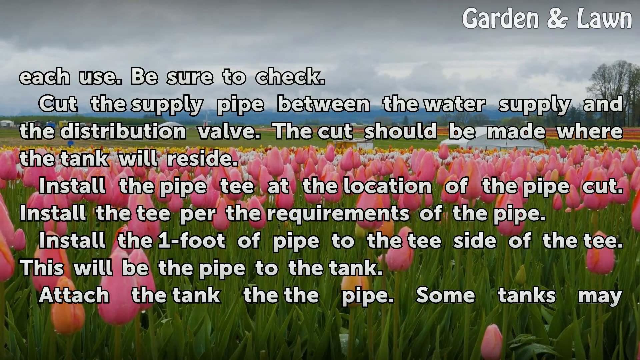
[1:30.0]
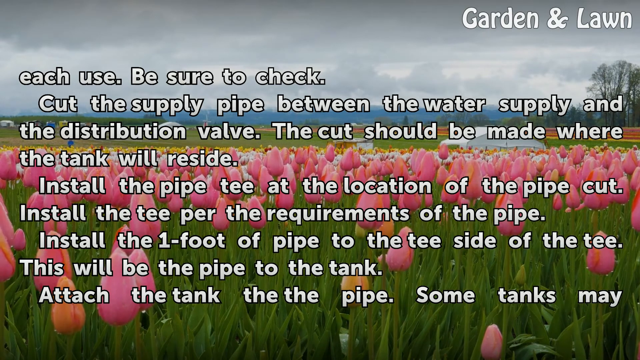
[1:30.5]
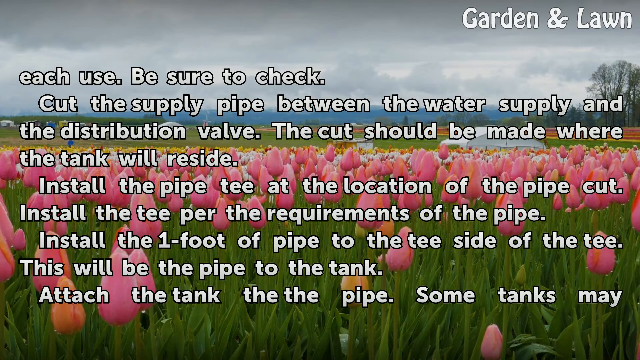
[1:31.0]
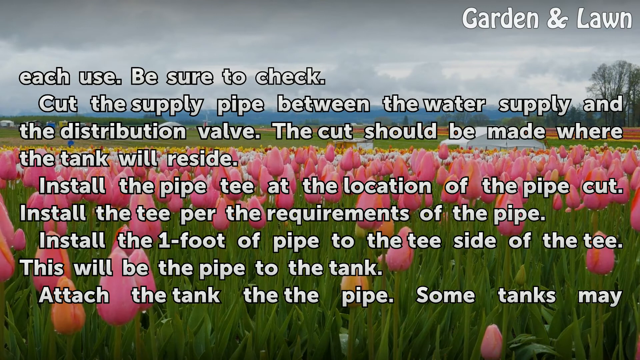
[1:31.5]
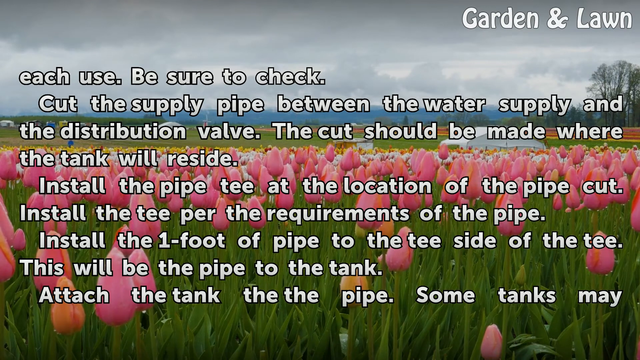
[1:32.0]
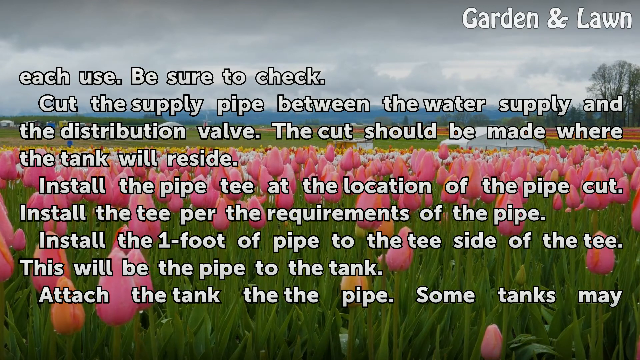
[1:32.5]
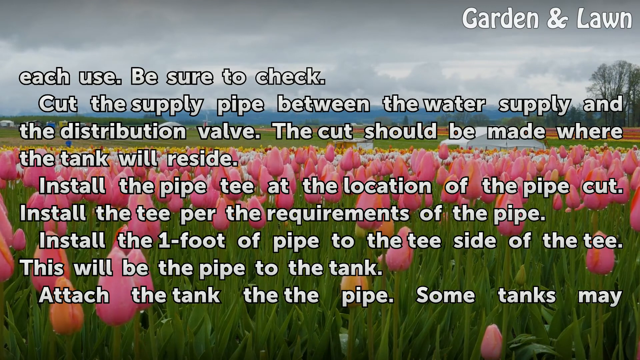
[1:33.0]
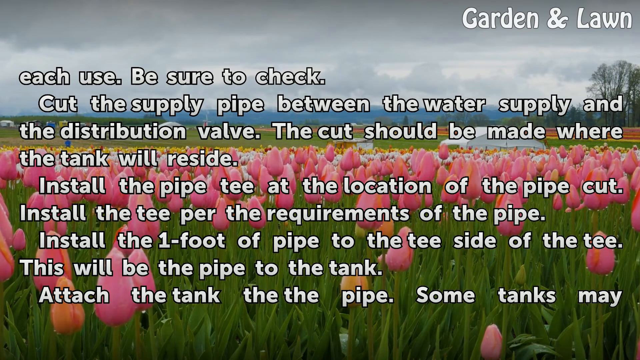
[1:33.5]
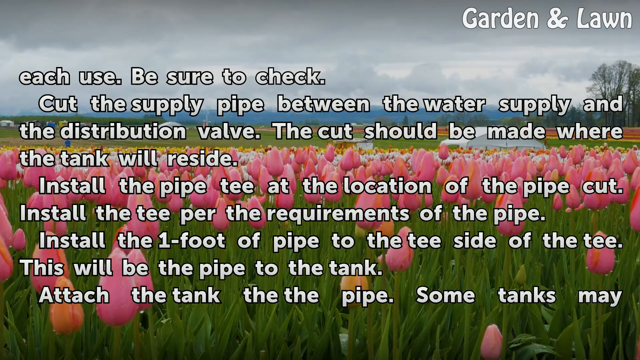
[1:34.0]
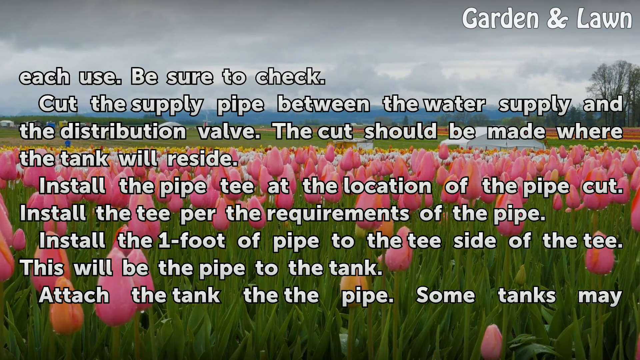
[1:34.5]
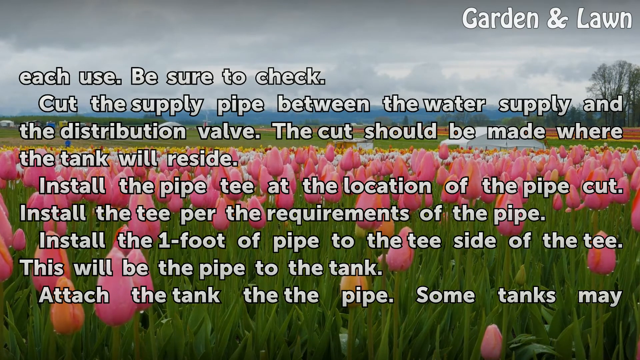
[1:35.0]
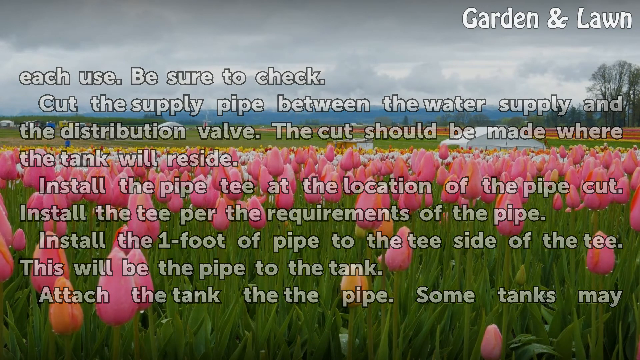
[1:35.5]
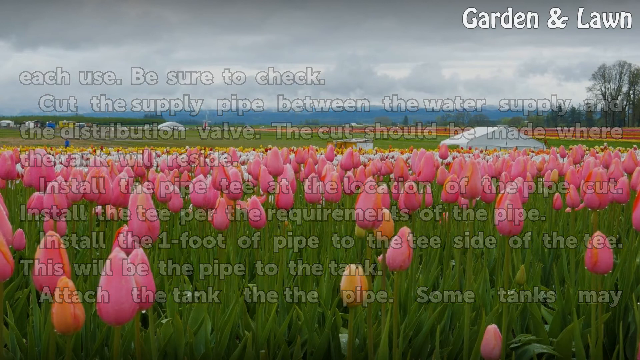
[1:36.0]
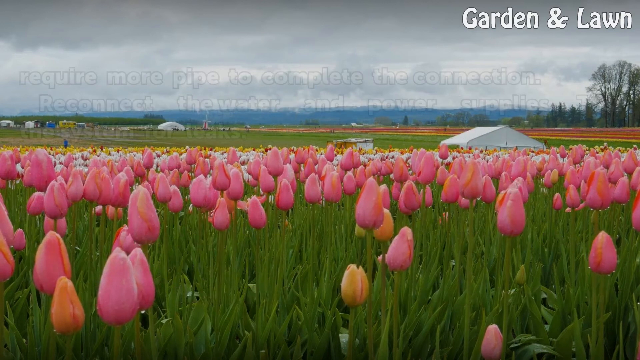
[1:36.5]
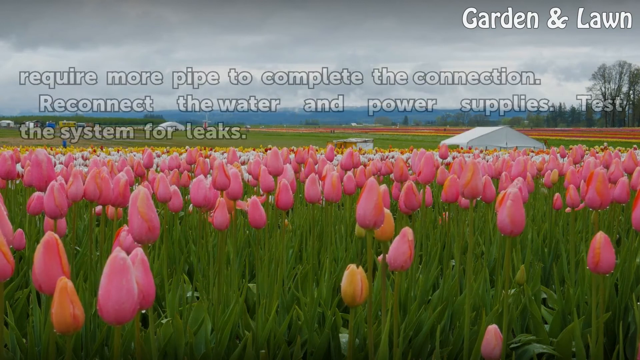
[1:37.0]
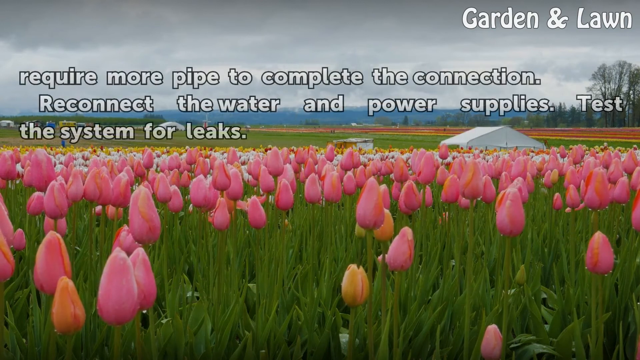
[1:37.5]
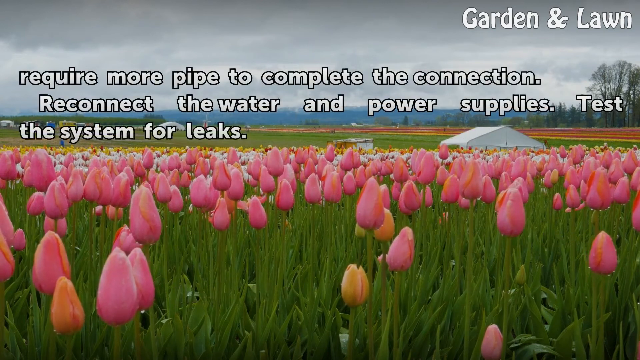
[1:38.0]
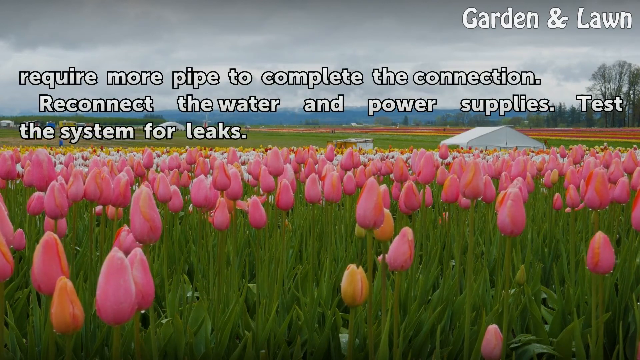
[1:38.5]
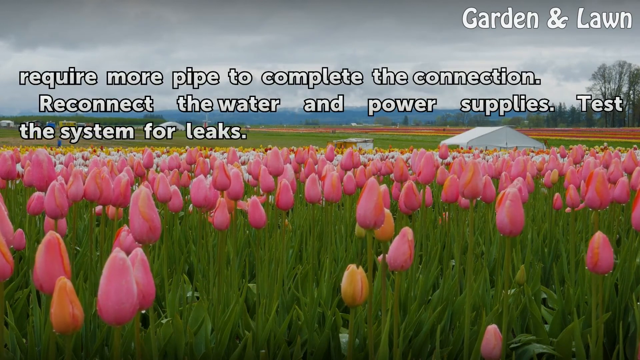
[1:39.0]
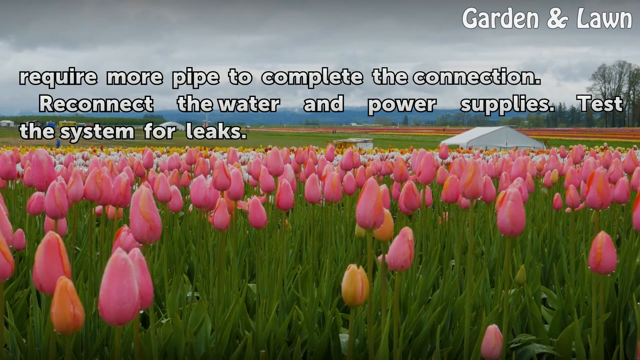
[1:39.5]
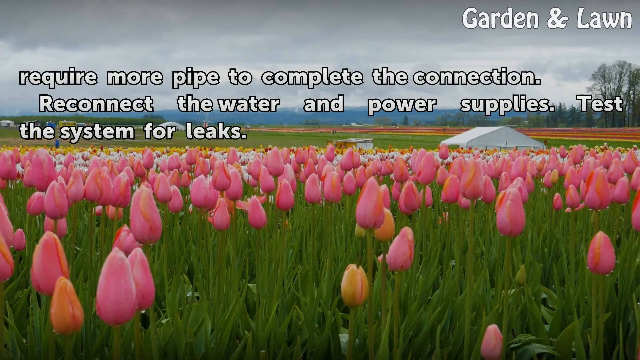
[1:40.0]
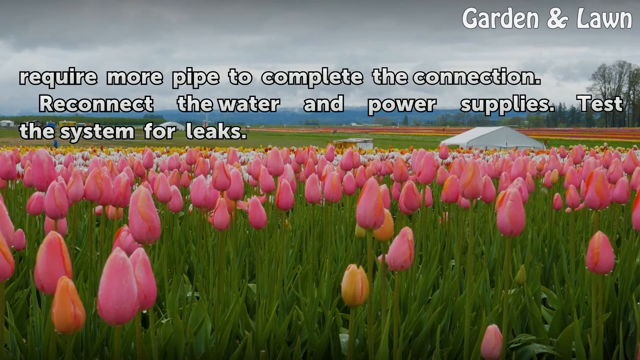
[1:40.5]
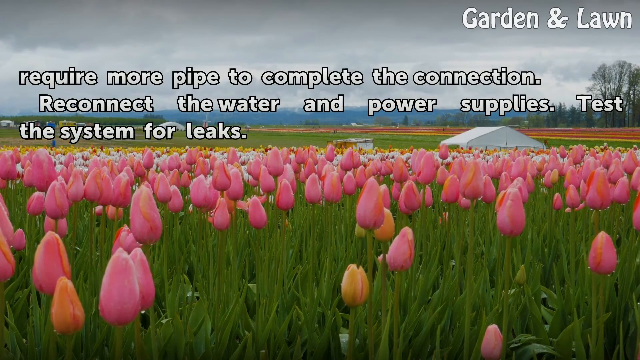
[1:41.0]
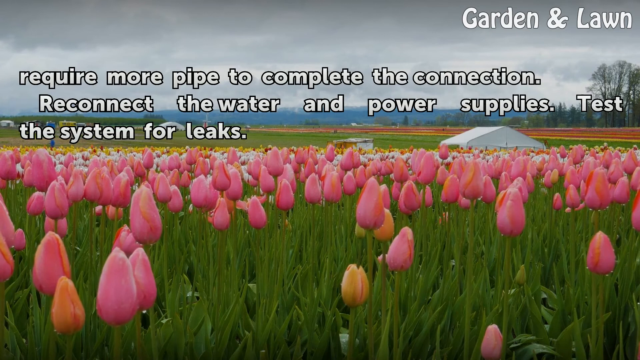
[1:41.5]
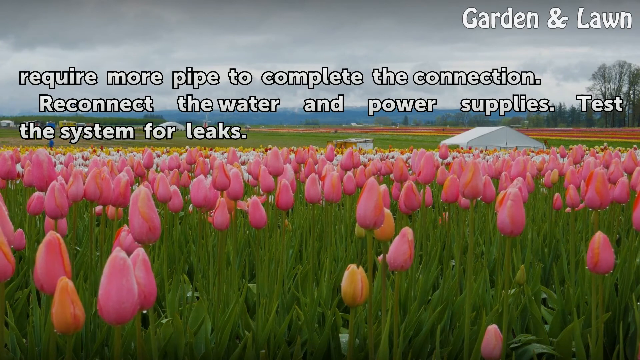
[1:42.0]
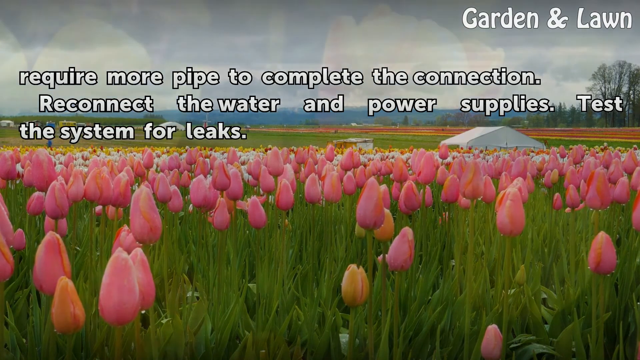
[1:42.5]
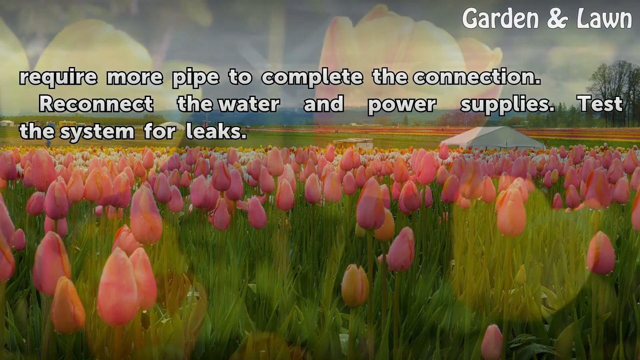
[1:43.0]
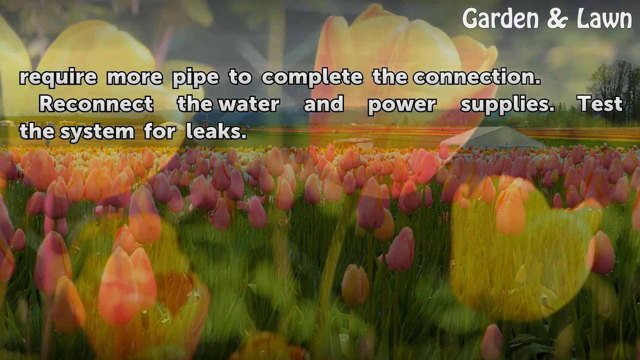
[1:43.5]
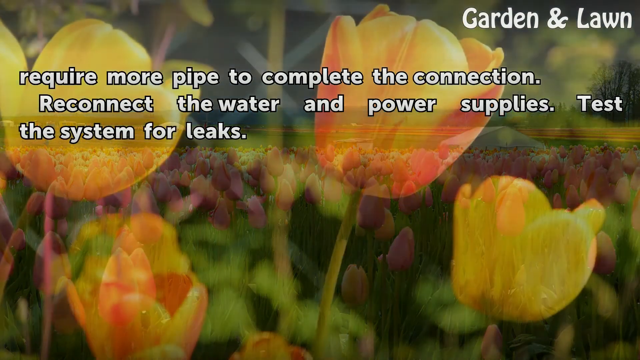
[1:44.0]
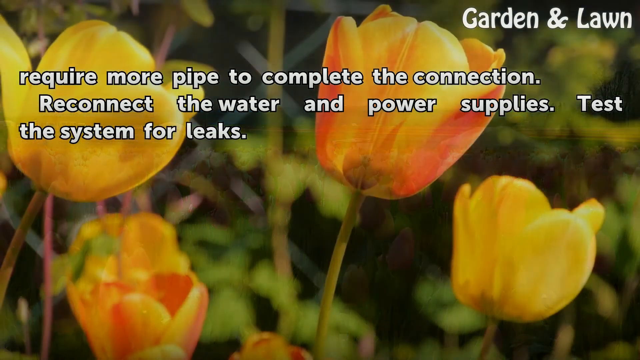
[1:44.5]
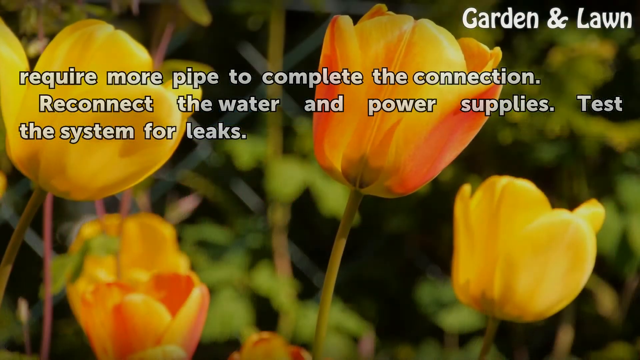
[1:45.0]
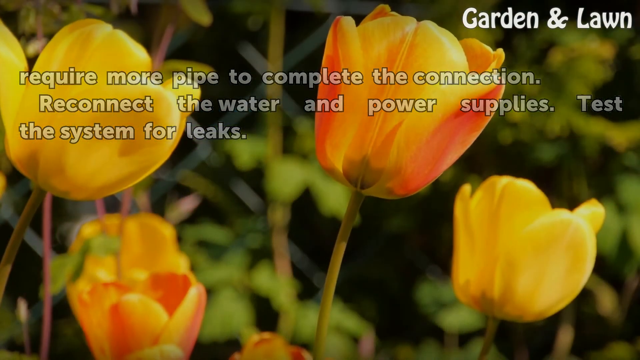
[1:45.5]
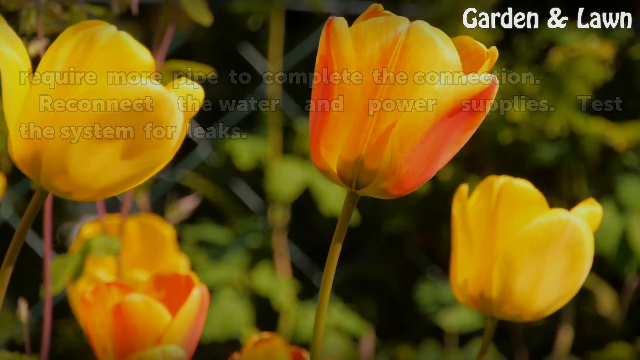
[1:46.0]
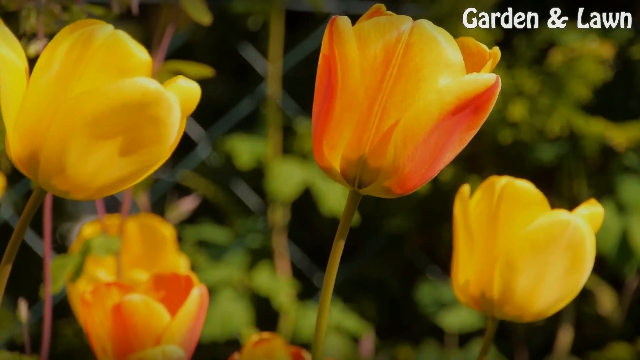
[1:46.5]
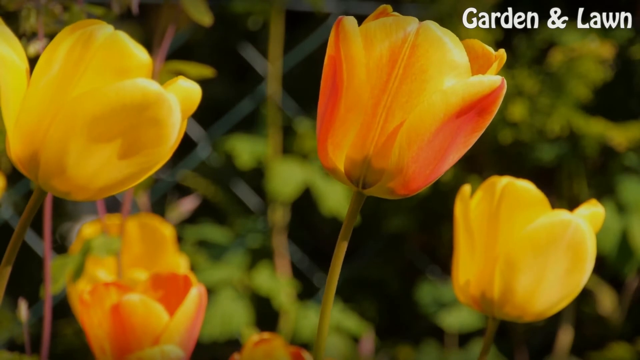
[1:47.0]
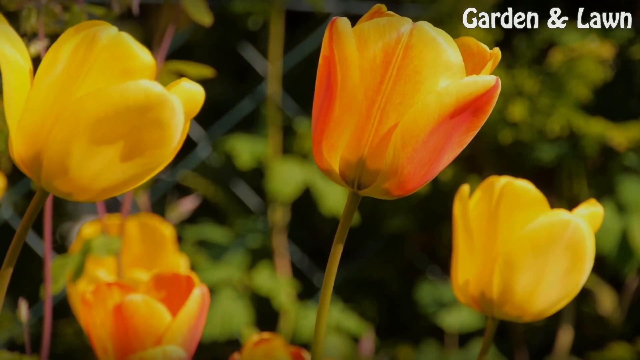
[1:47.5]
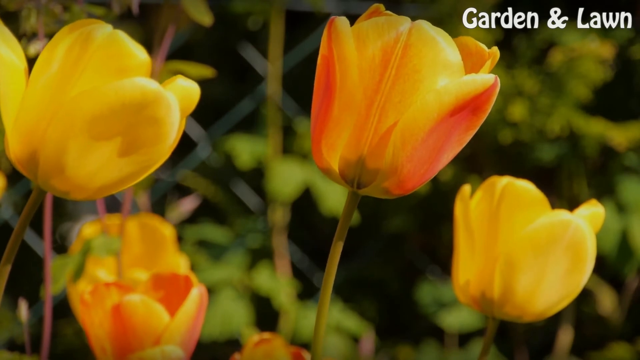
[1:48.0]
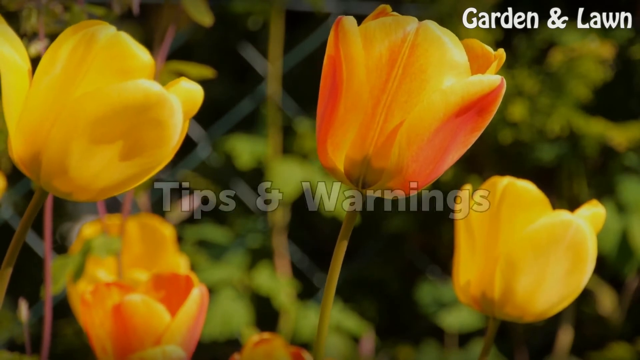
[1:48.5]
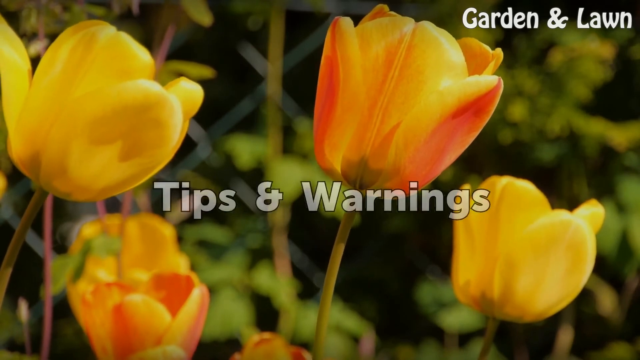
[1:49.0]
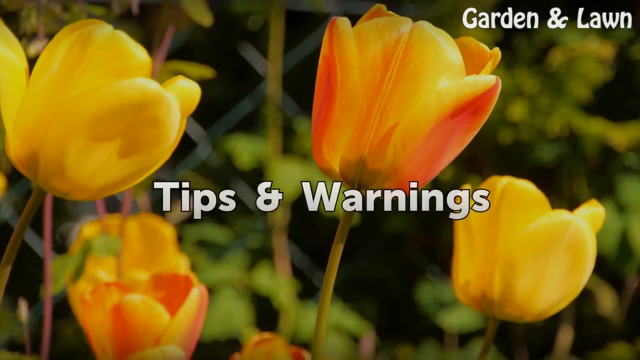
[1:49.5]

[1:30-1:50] The Garden and Lawn video continues with a background of pink, white and yellow tulips swaying in the breeze. The tank instructions continue on screen, ending with "some tanks may require more pipe to complete the connection, reconnect the water and power supplies, test the systems for leaks." Then a close-up of yellow tulips swaying in the breeze appears, with four main flowers in the picture, and a caption comes on screen reading "tips and warnings".